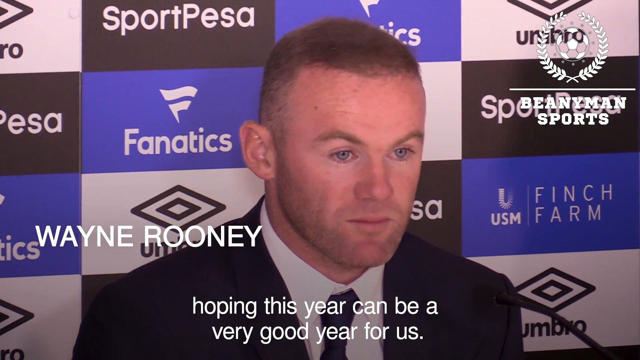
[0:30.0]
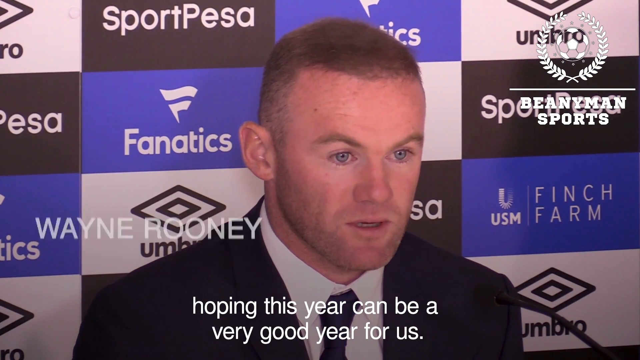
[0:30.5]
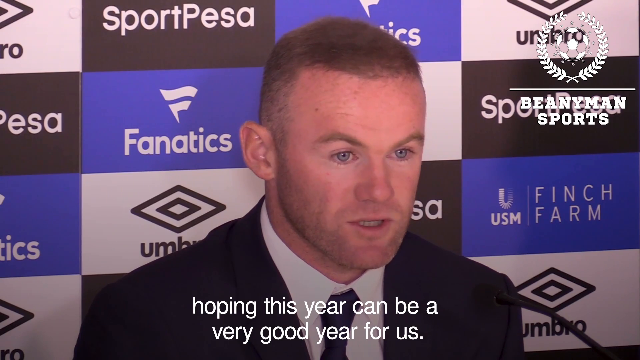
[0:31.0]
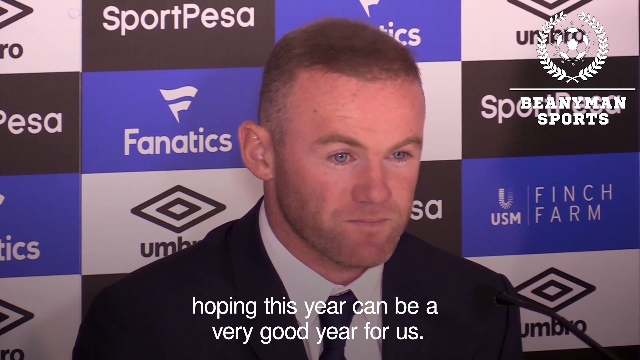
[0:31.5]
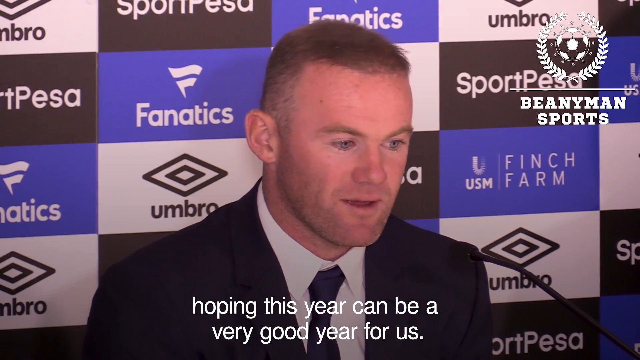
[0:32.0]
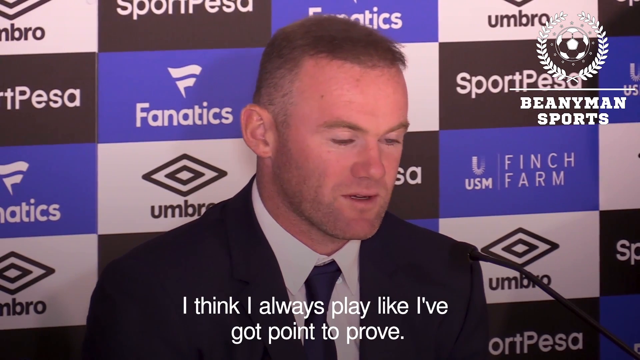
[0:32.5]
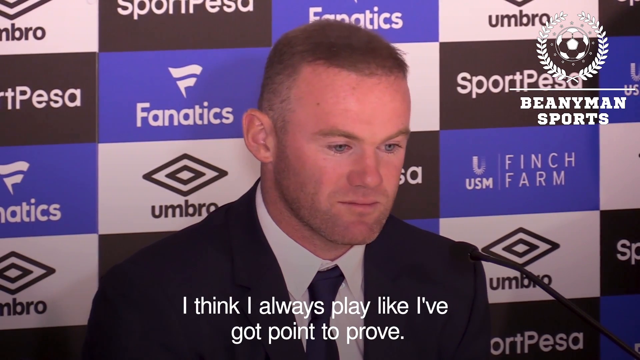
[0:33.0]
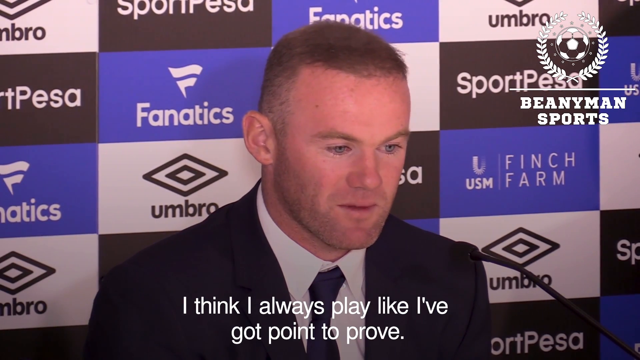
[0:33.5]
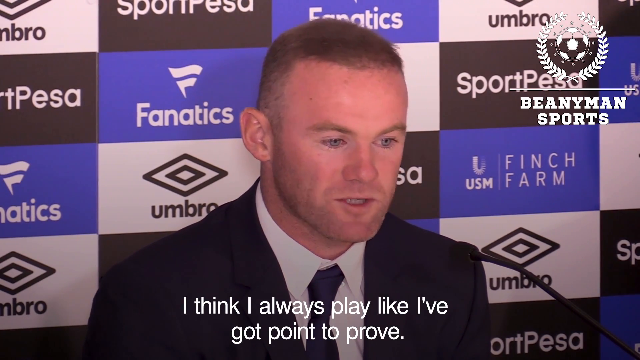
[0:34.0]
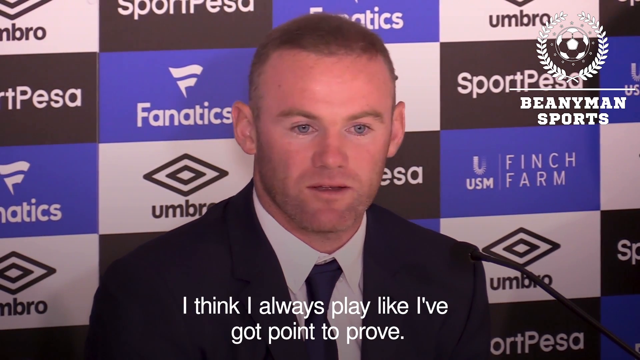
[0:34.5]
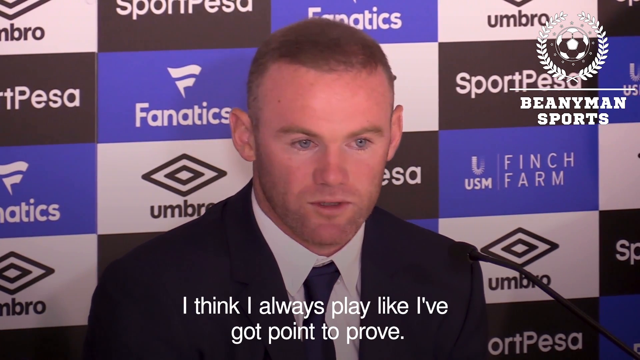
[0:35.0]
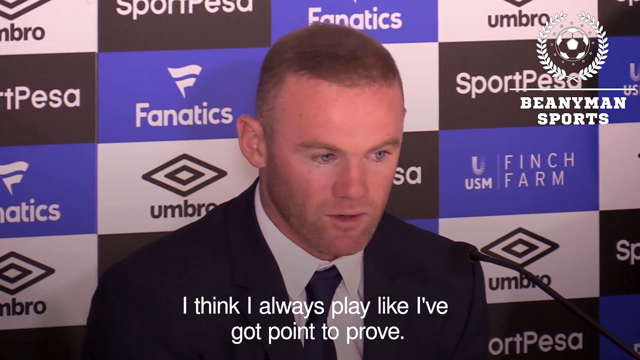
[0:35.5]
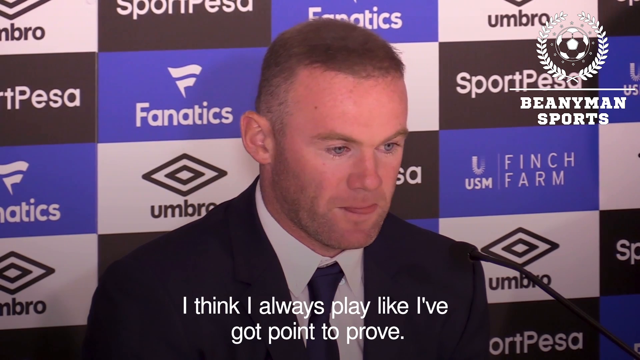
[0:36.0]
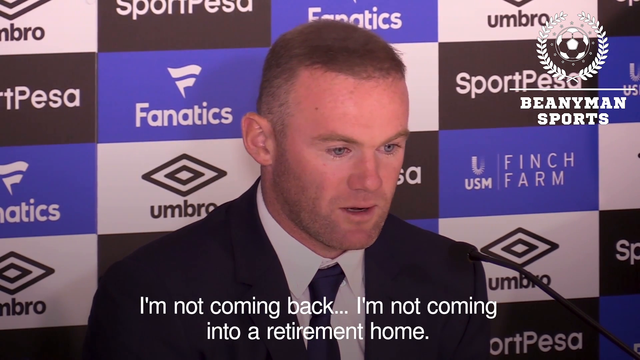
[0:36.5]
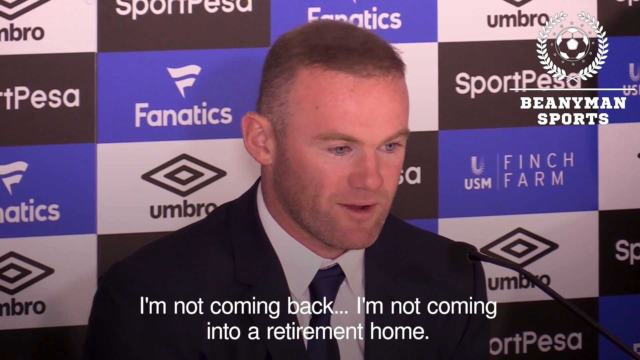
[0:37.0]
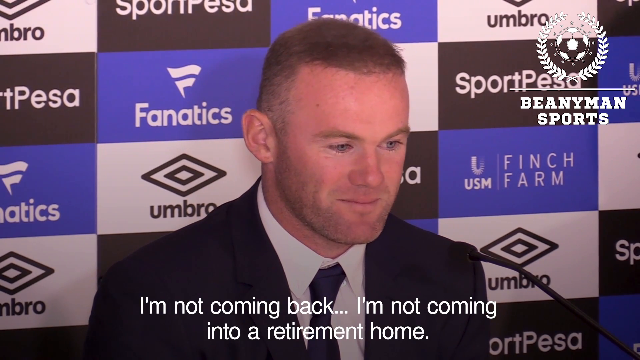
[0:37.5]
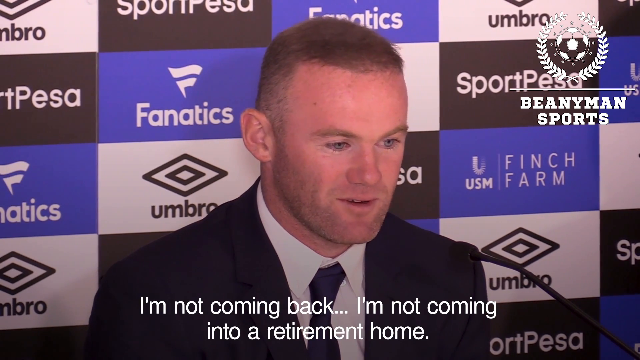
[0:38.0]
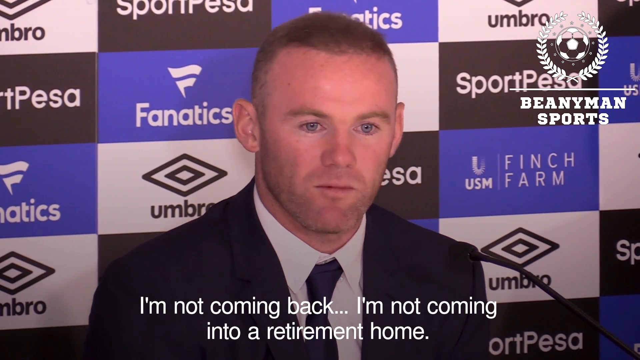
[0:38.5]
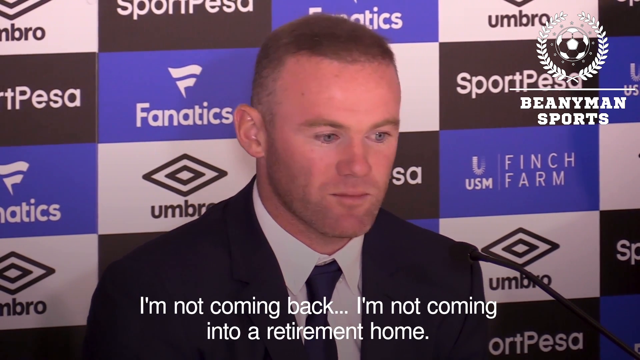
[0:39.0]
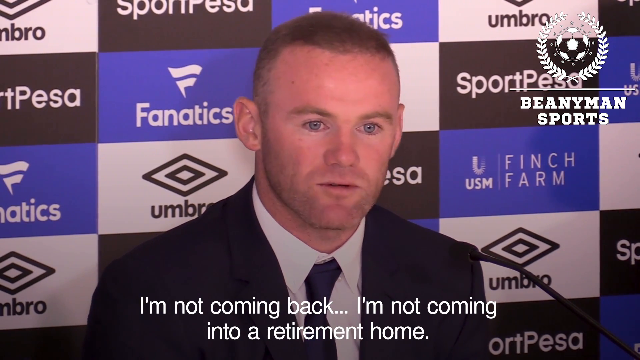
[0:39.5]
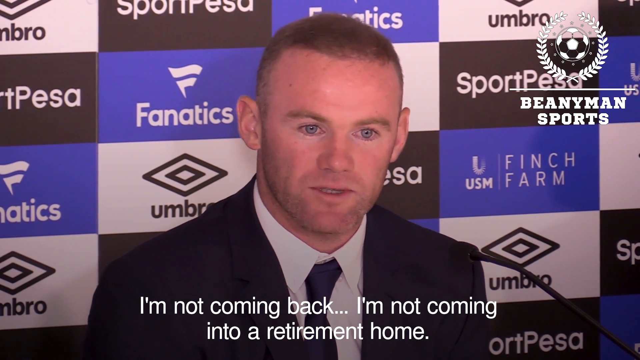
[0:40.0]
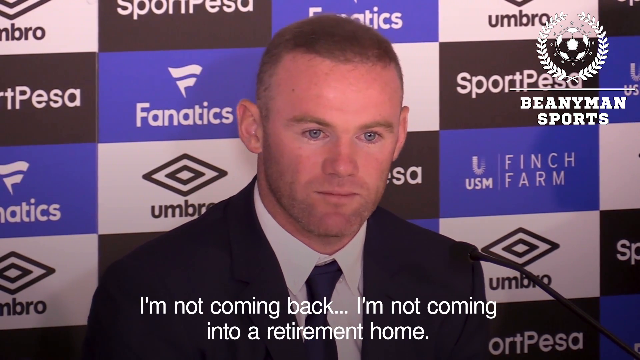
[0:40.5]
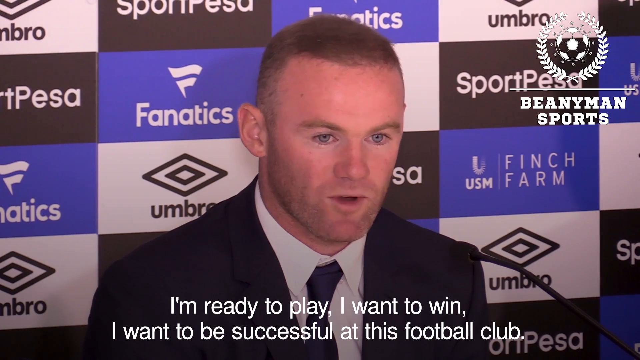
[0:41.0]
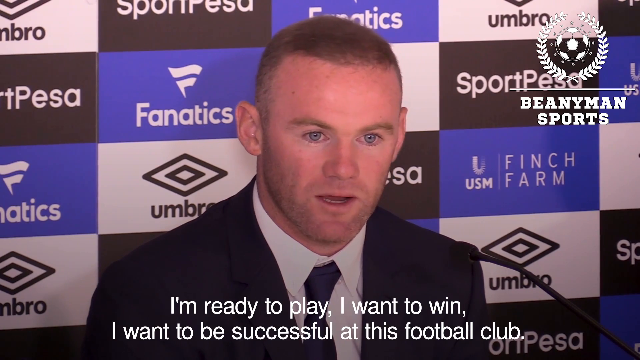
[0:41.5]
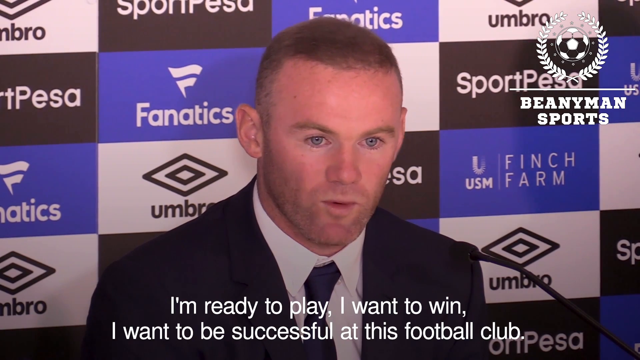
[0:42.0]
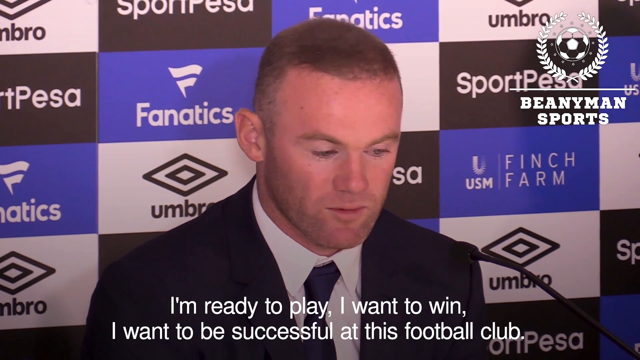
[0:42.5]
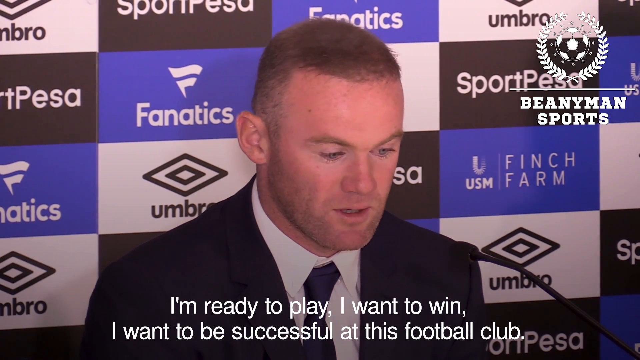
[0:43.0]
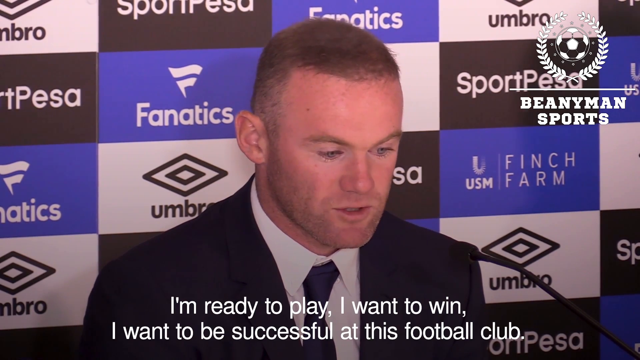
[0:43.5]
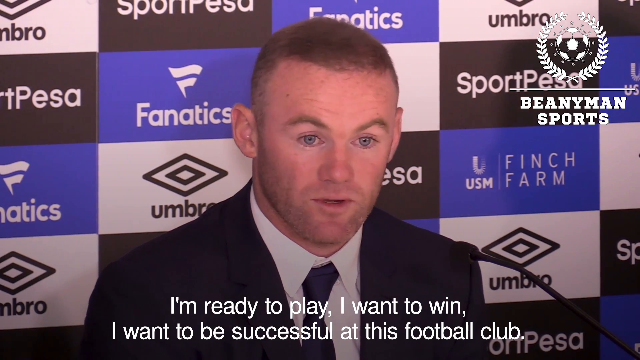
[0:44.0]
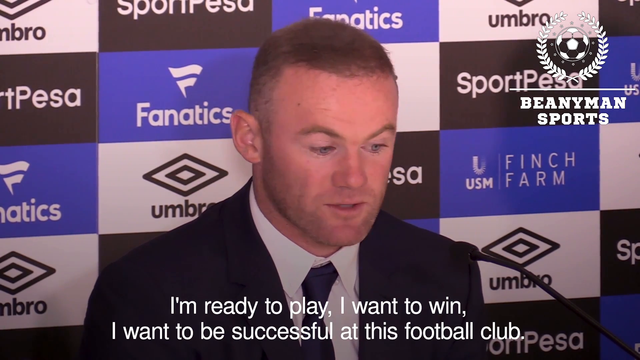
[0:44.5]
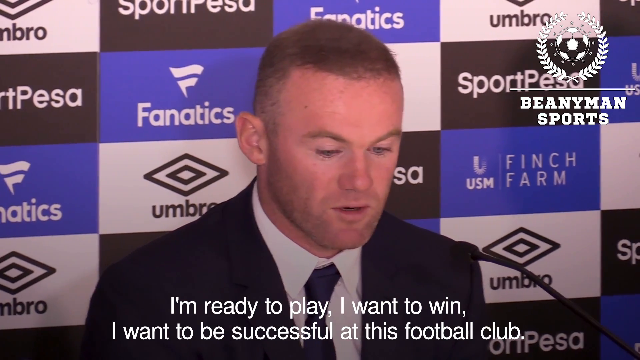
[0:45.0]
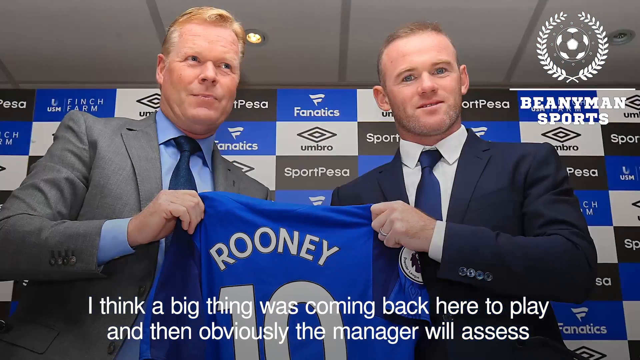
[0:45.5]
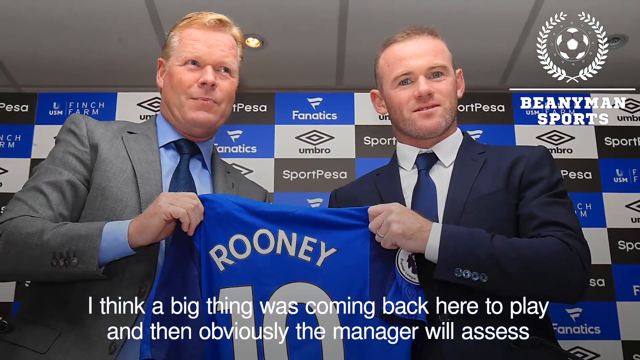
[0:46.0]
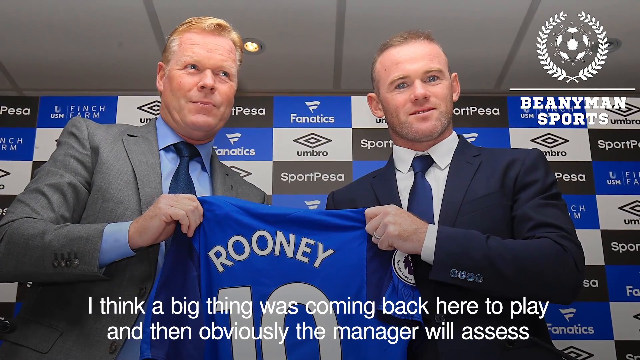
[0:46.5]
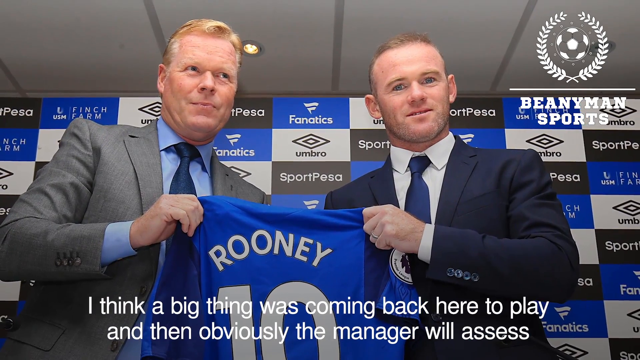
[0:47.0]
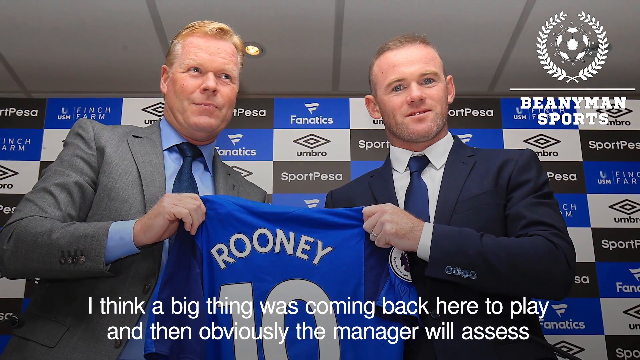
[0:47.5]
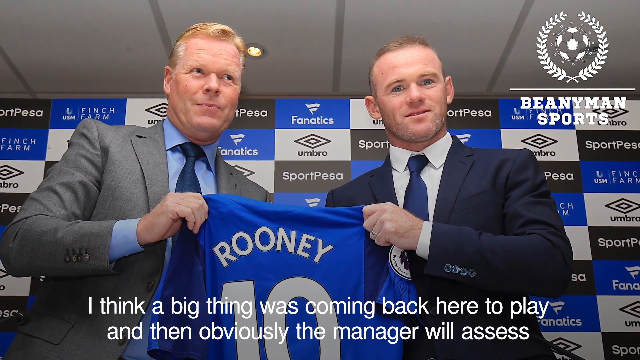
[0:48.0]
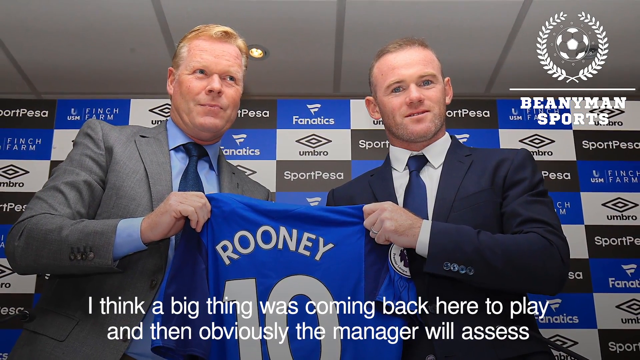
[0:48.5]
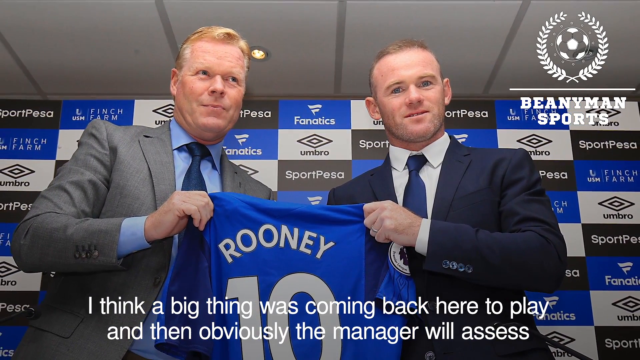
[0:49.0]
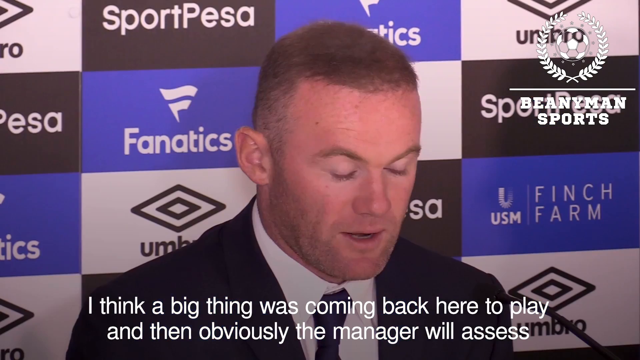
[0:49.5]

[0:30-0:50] Ronnie gives a speech, and the Beanny Man Sports icon is in the top right-hand side of the screen. The sponsors behind him are now clearer: Fanatics, Umbro, Finch Farm, Sportspressa and Sportpizza. Ronnie says, "I think I always like to play like I got a point to prove. I'm not coming back. I'm not coming into a retirement home. I'm ready to play. I want to win. I want to be successful at this football club. I think a big win was coming back here to play." His face looks very serious and determined. He wears a suit and looks very formal.